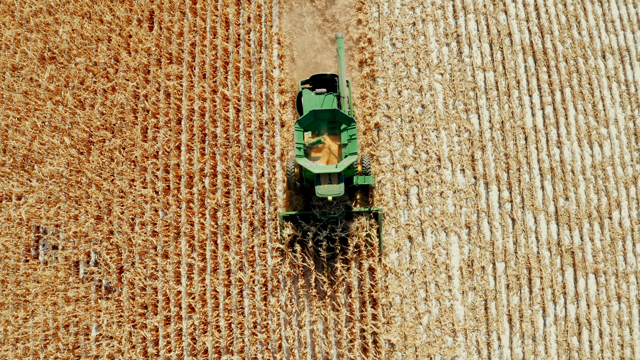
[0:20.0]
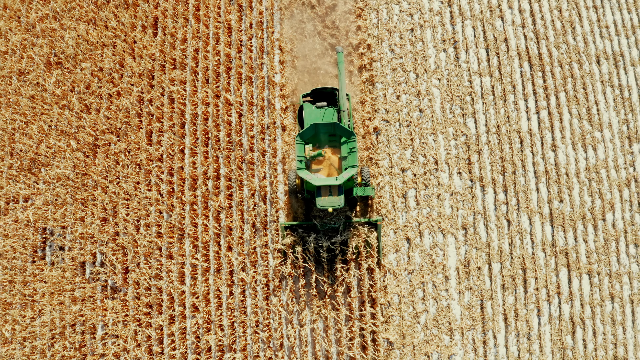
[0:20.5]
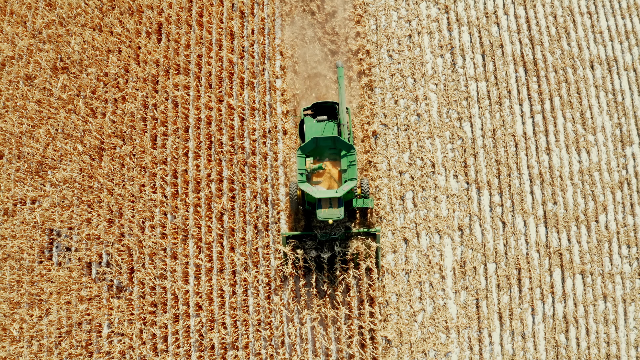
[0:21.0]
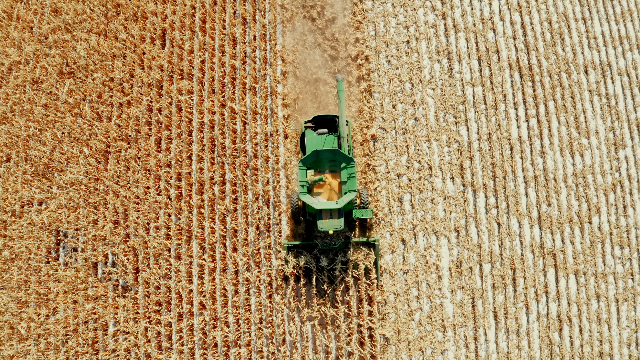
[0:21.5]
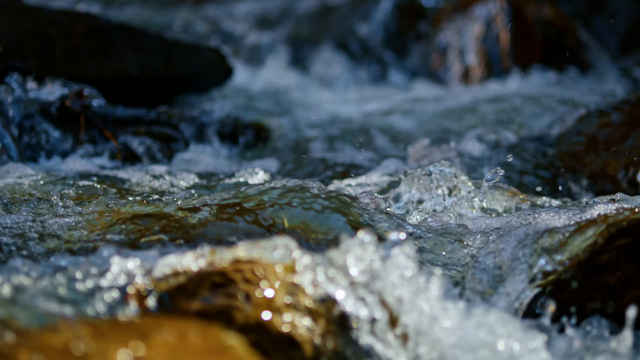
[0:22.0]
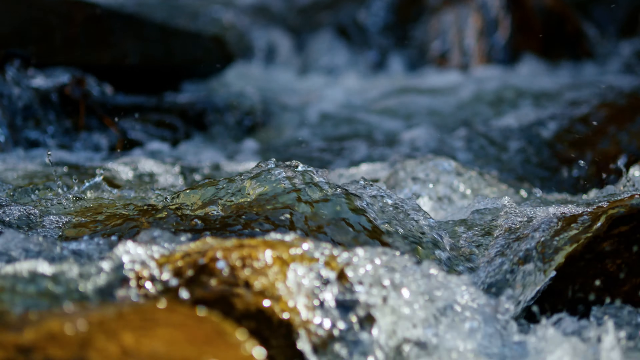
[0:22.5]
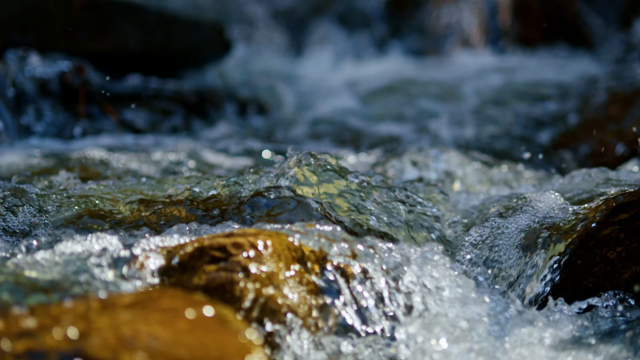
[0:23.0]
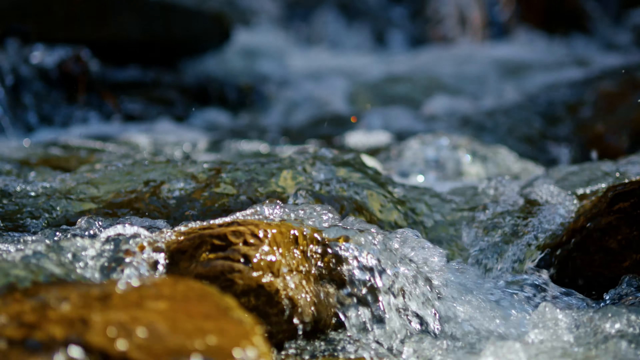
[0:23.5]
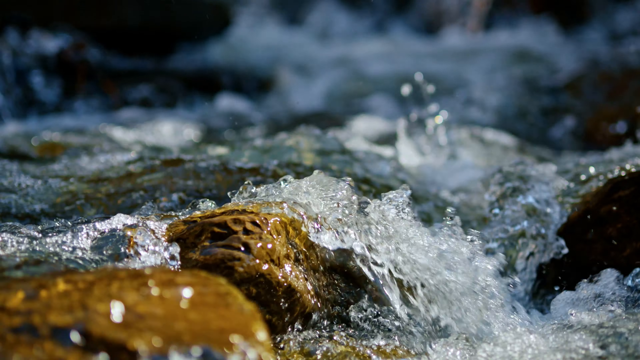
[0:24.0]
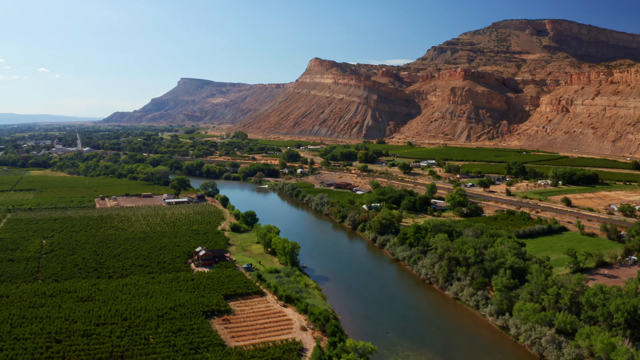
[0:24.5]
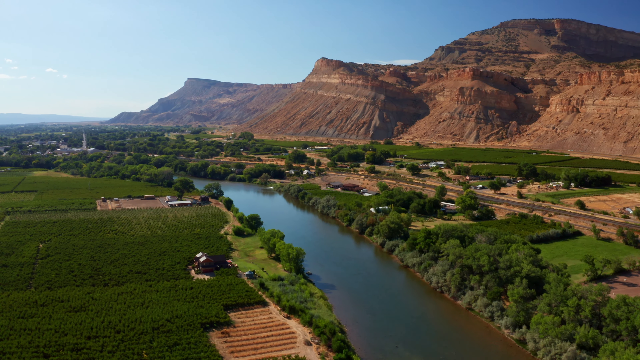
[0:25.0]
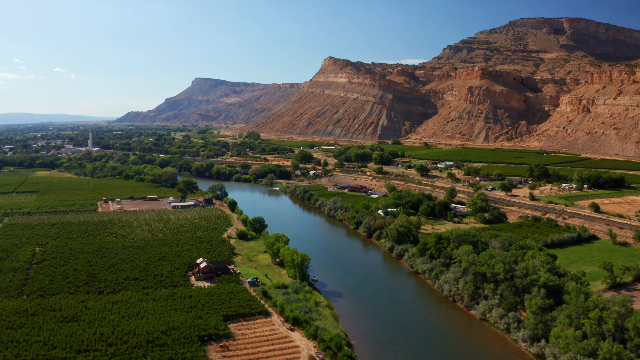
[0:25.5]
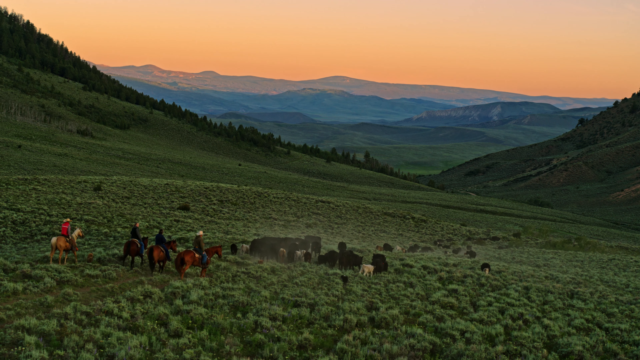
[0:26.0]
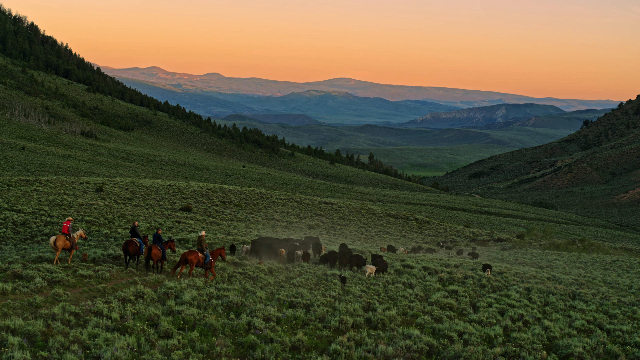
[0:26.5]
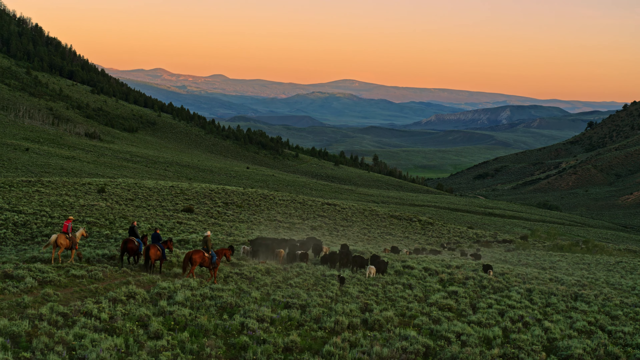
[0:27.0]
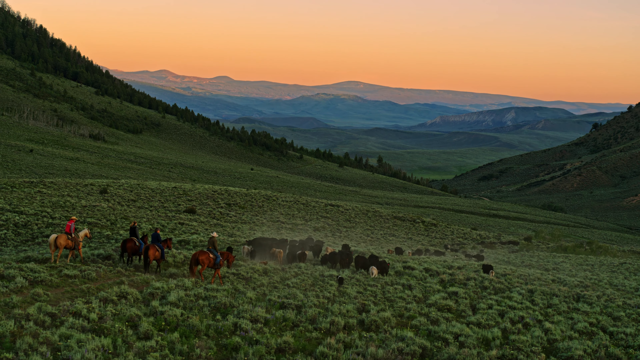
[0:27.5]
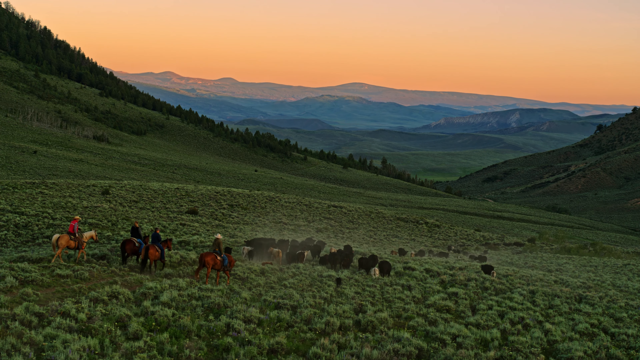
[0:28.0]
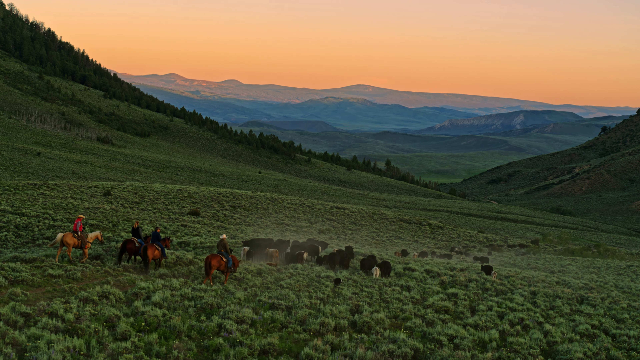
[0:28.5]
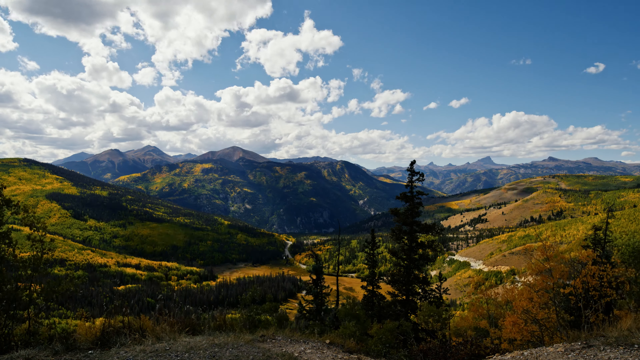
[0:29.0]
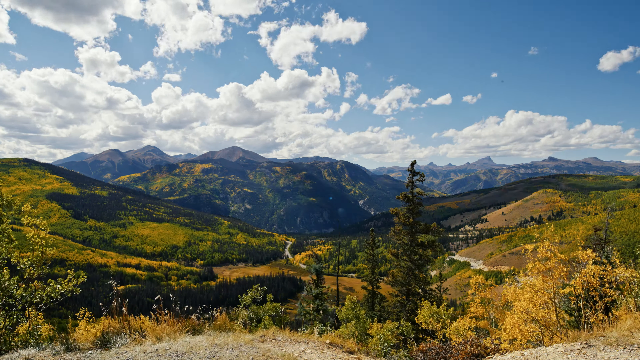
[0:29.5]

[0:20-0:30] A green tractor harvests something yellow in a field, driving toward the bottom of the screen, toward the viewer. The video switches to a close-up of a bubbling brook, then to cultivated farmland next to red rock cliffs in the background on the right, with a reasonably sized river going through it. Four people on horseback drive a herd of cattle over an open, hilly area, with mountains in the background fading into the sunset. A time-lapse shows a mountain landscape with clouds overhead and lots of yellows and greens. The video then switches to an elk.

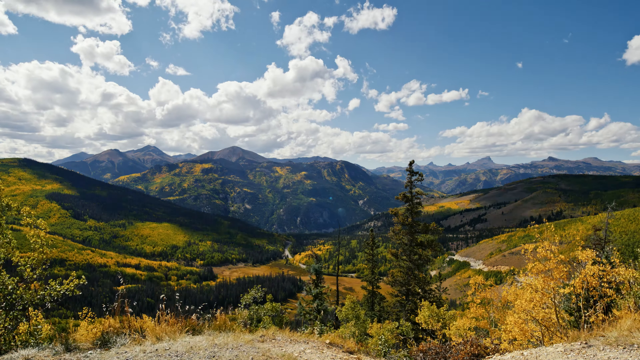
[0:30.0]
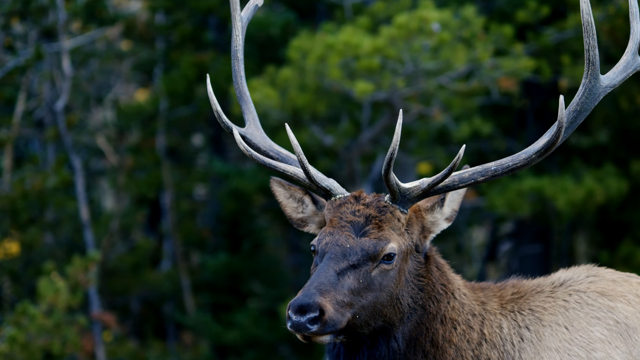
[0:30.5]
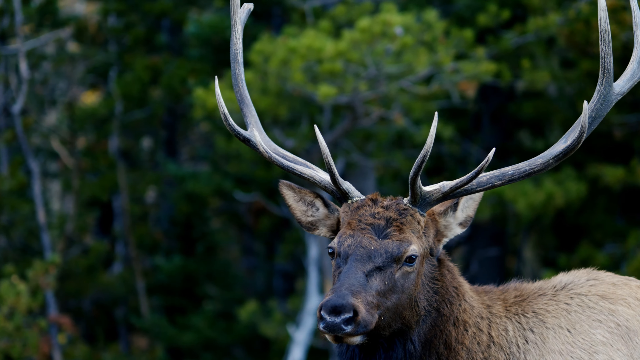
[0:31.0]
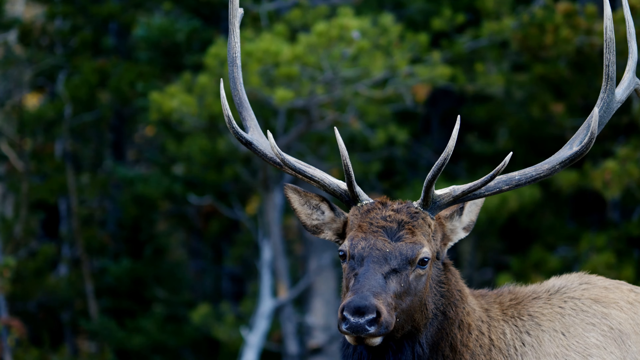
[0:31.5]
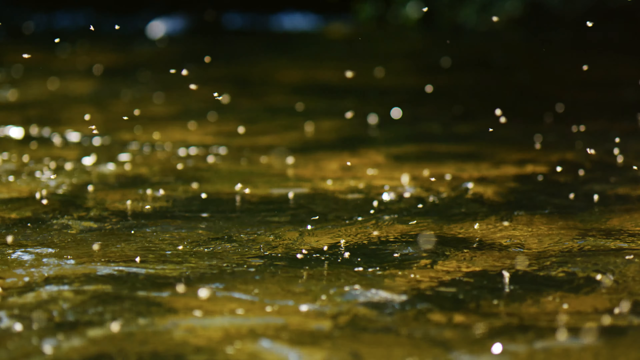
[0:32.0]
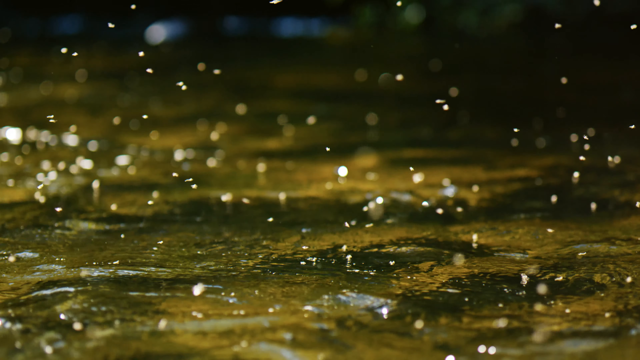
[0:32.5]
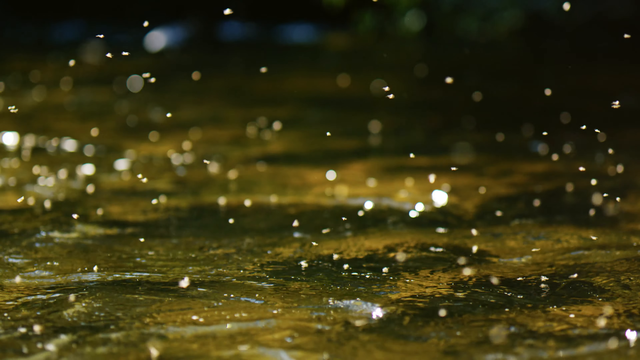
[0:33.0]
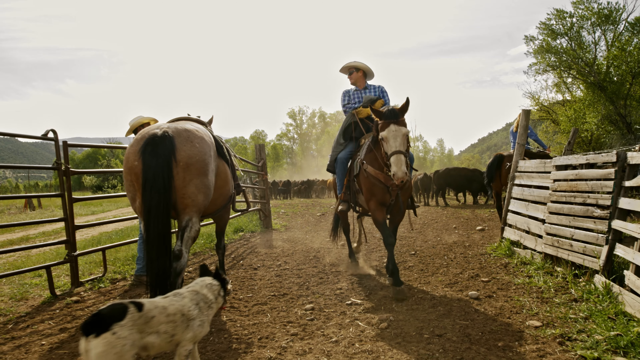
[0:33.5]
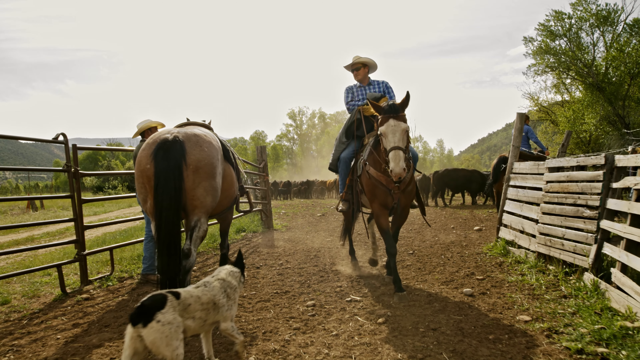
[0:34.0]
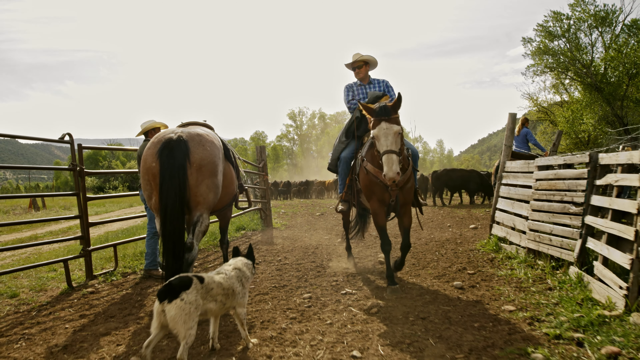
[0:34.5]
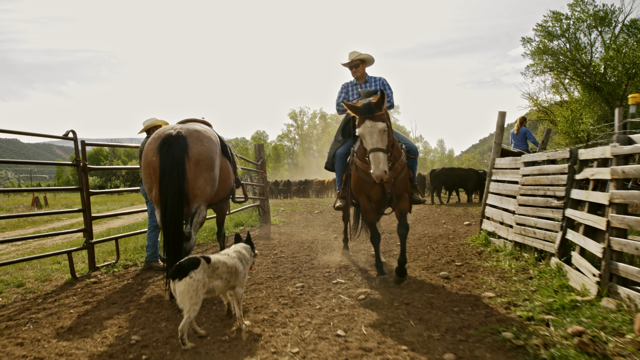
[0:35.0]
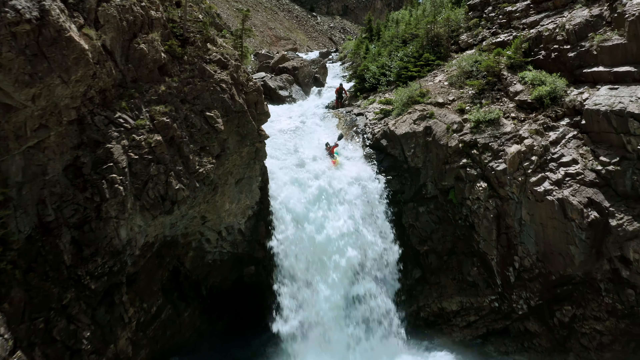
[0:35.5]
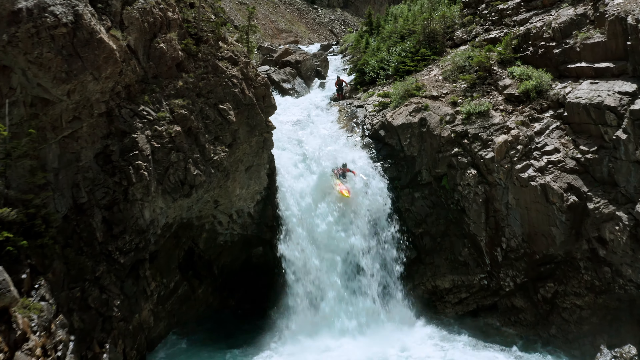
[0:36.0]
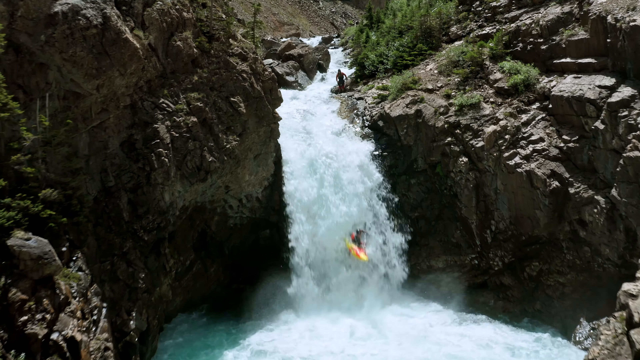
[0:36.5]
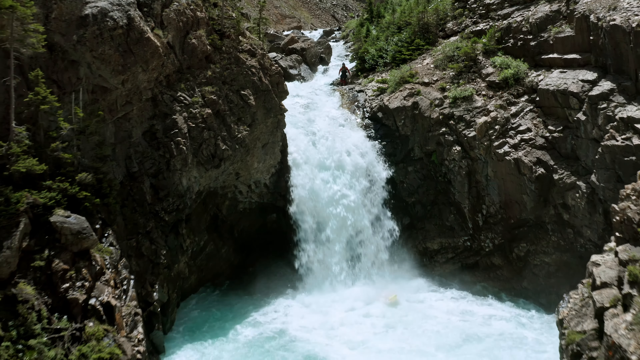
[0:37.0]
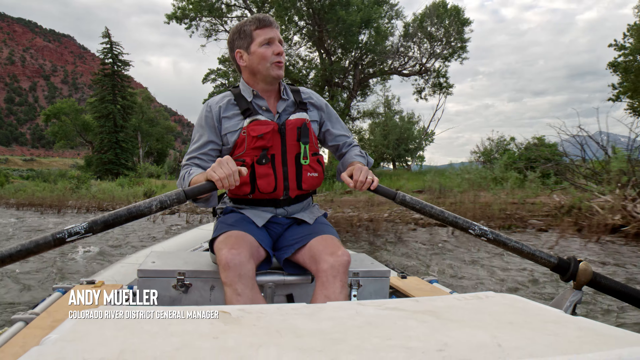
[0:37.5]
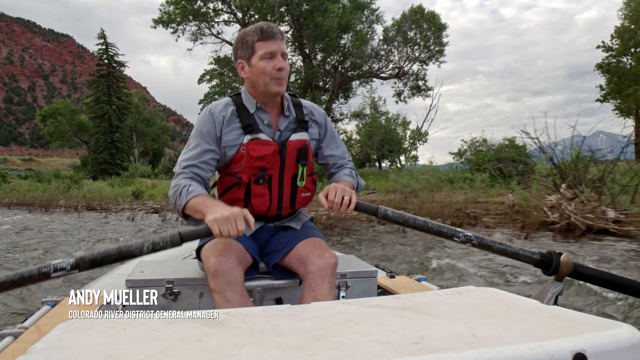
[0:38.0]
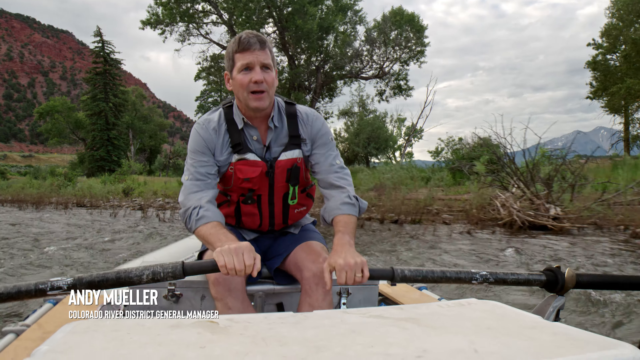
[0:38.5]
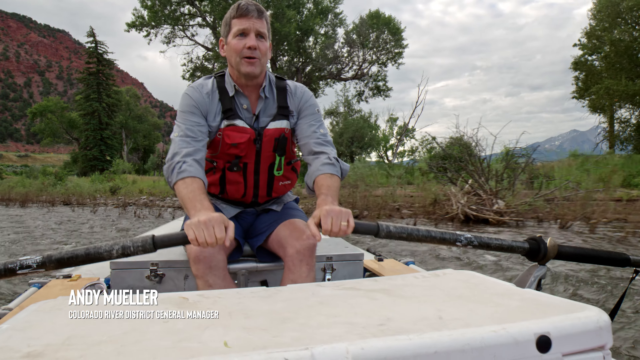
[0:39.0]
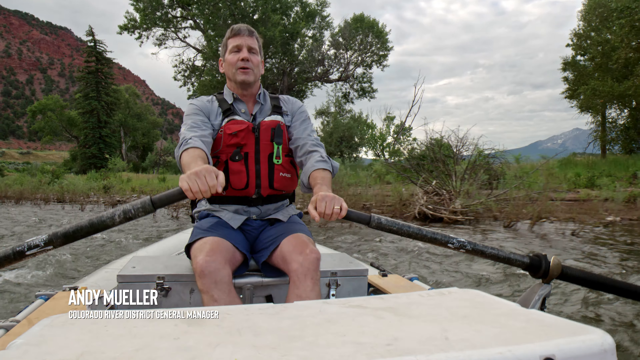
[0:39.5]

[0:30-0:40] An elk with big antlers turns to his left as the camera pans to his right, with a forest in the background. The video switches to a very shallow, calm stream with dust motes dancing above it, then to a farm where one person is on horseback and another has just gotten off their horse; a farm dog and cattle are in the background by a cattle chute, with another person in the background with the cattle. A whitewater kayaker goes over a steep-drop waterfall while someone stands in the background. Another boater, apparently a canoer going fishing, wears a life vest and looks like he is having a casual day, sitting on top of his tackle box in some kind of large self-propelled water vehicle. The view goes from a close-up of him to a wide view of him on the river, pulling out like a drone shot.